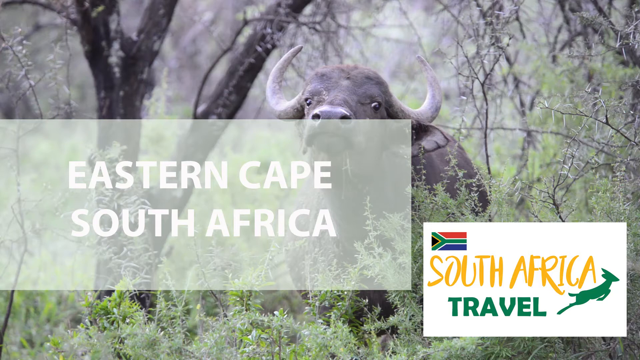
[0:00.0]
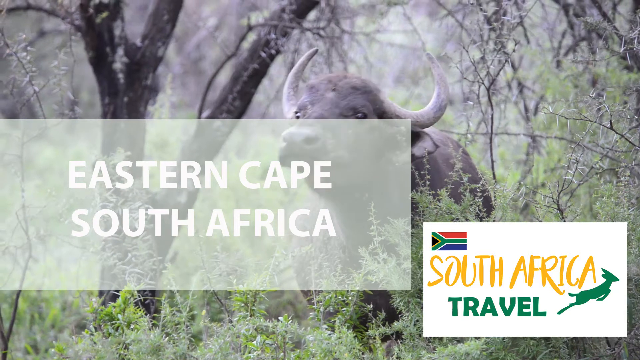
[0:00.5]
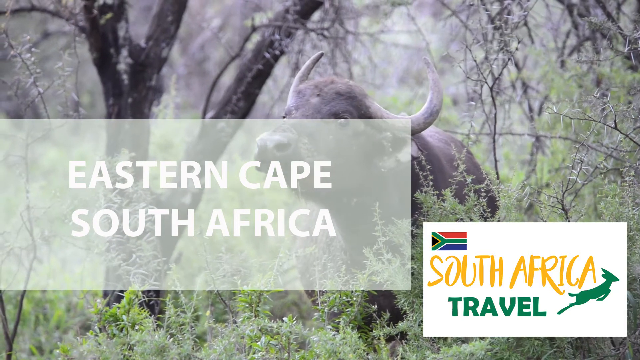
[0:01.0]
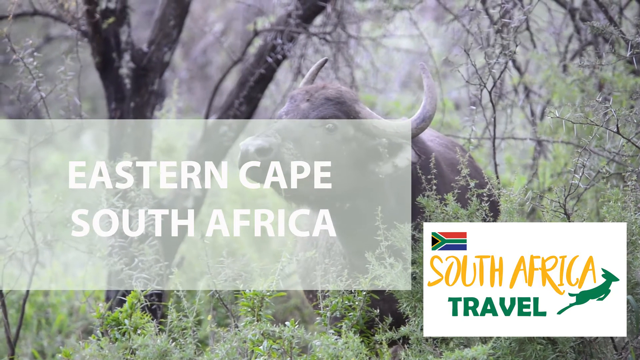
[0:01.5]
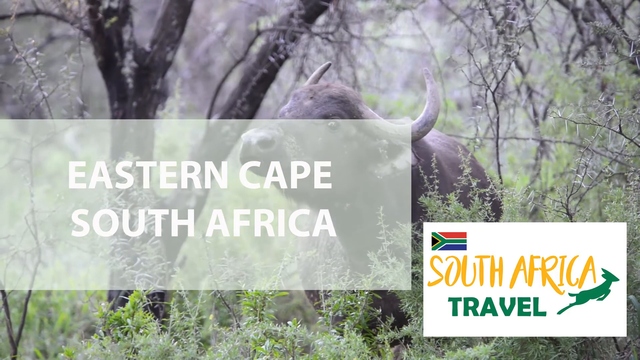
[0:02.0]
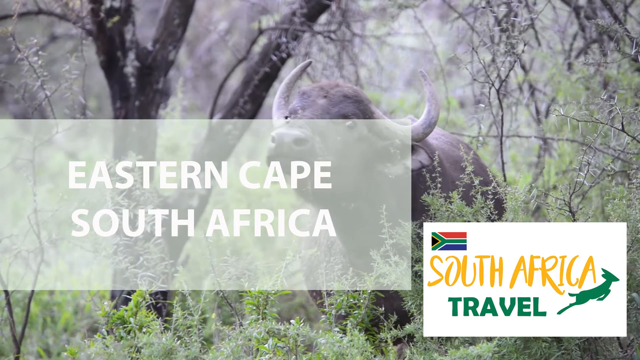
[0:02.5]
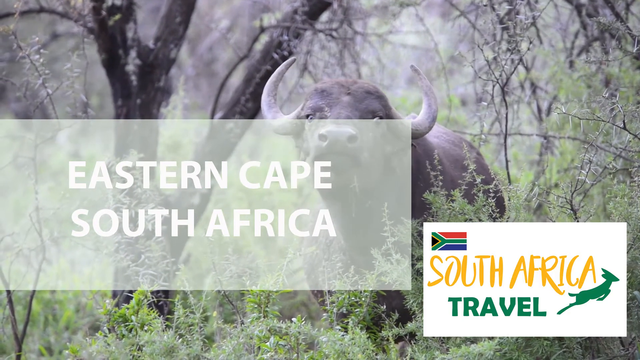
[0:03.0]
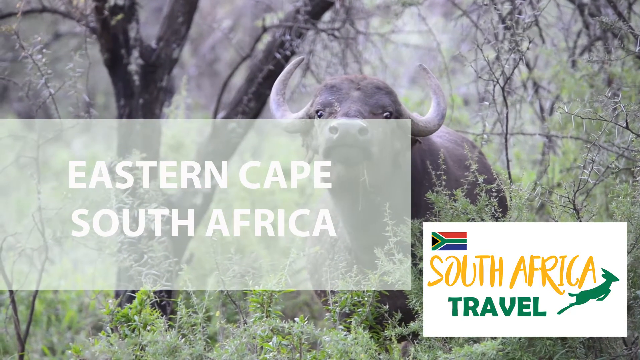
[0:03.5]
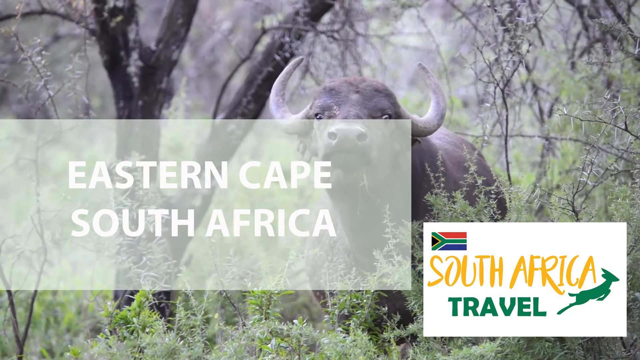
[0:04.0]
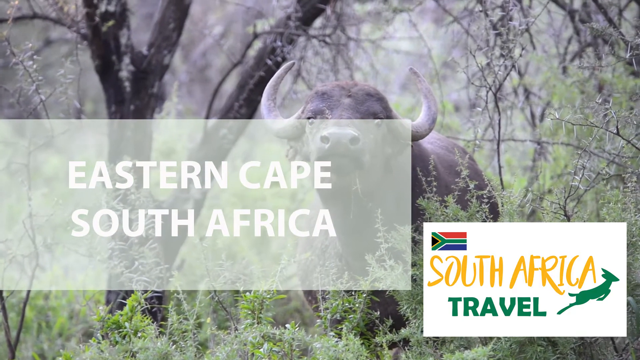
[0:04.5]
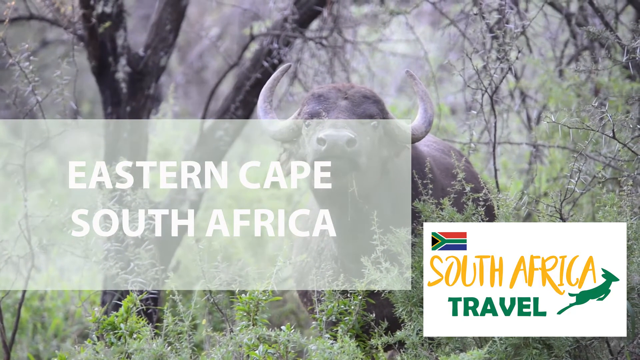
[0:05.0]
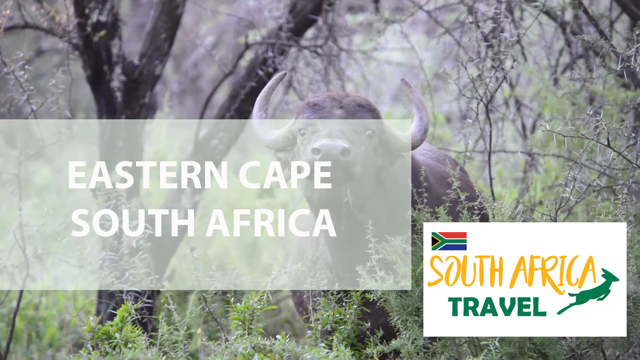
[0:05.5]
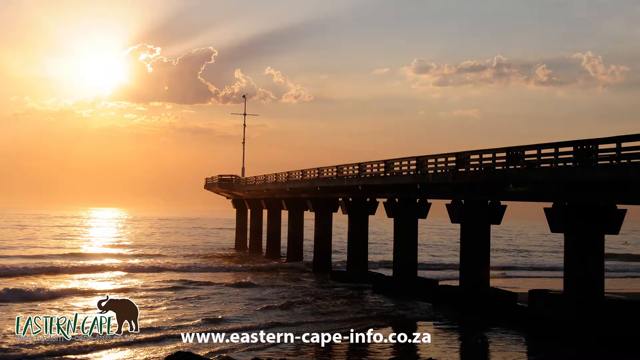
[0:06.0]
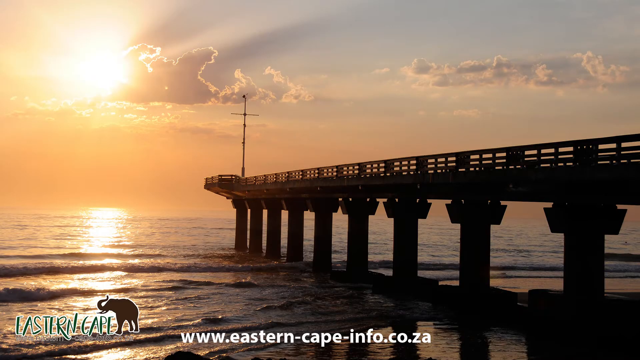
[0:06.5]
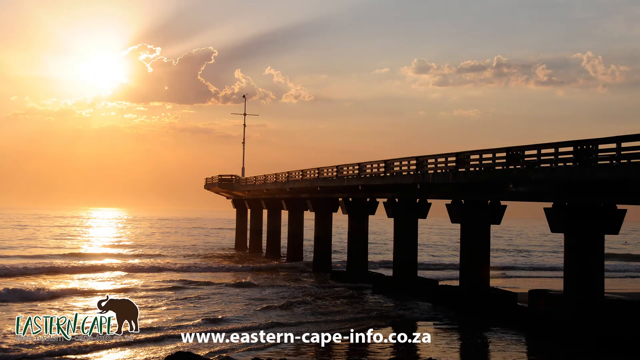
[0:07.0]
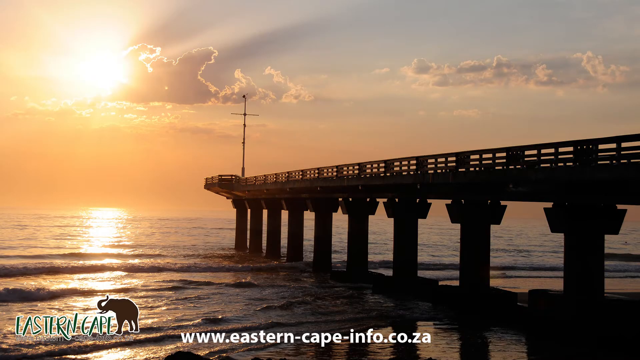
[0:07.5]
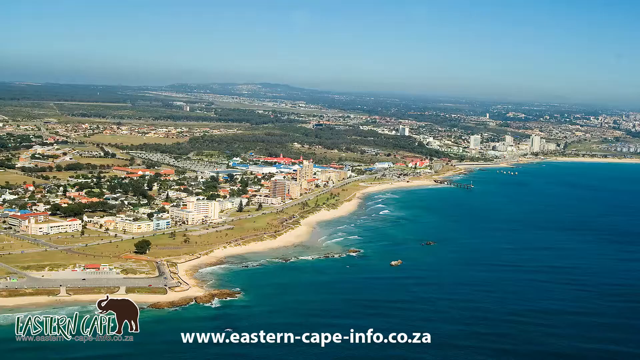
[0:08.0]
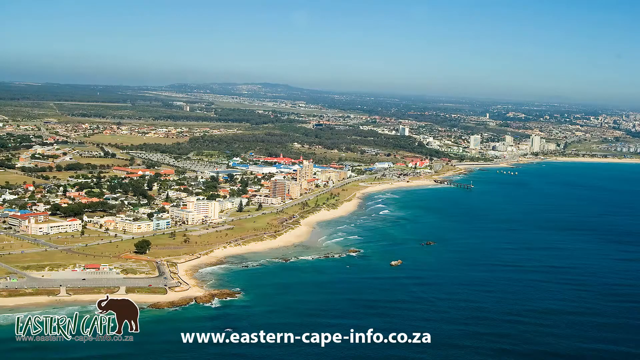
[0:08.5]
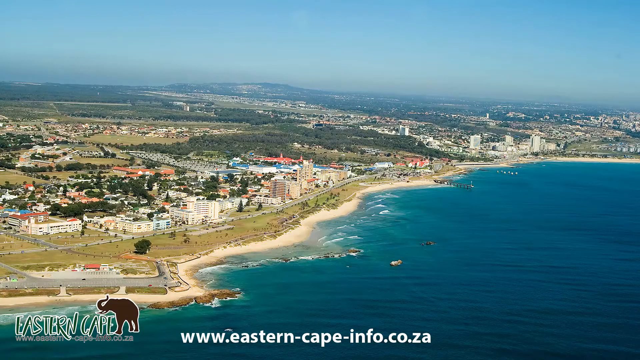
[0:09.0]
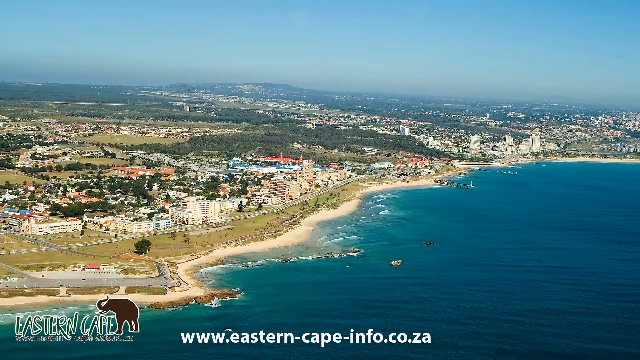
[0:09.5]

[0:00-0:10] The video begins with a title card bearing the words "eastern cape south africa" over a white, transparent rectangle. In the bottom right corner is a South Africa travel logo that contains the flag, with "south africa" in yellow letters and "travel" in green, and a green animal next to "travel". In the background, a buffalo stands among trees that don't have many leaves; the buffalo looks toward the camera, looks to the right, and then looks back toward the camera. The next shot shows a sunset at a long boardwalk; the tide is very low, so all the columns below the boardwalk are visible. Another shot gives overhead views of a bridge along the coast.